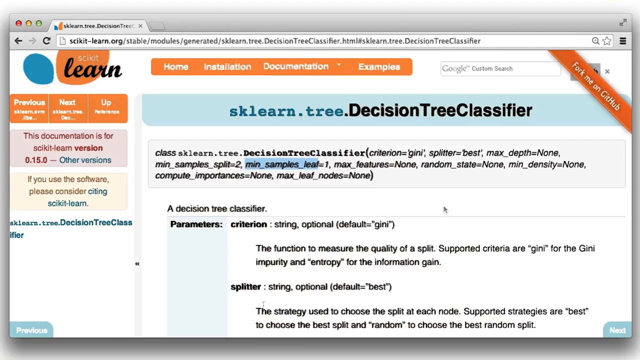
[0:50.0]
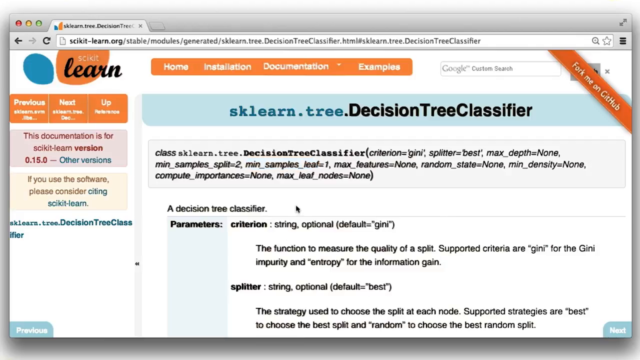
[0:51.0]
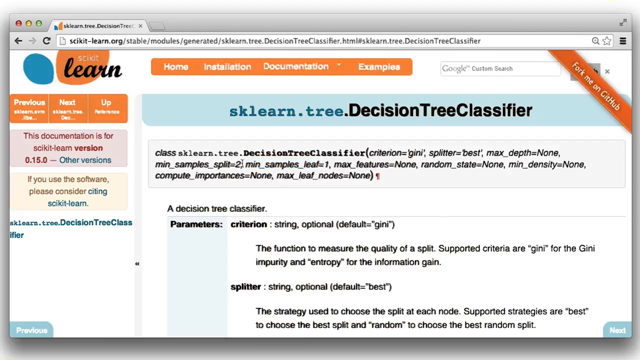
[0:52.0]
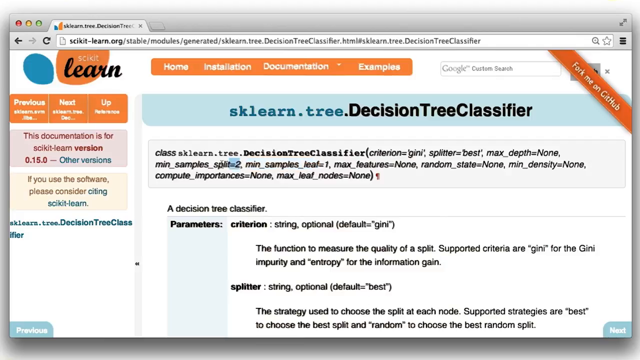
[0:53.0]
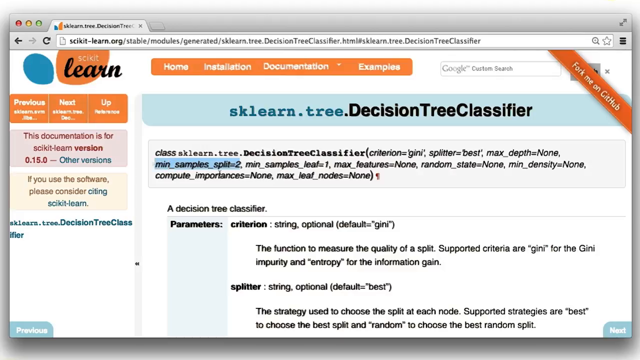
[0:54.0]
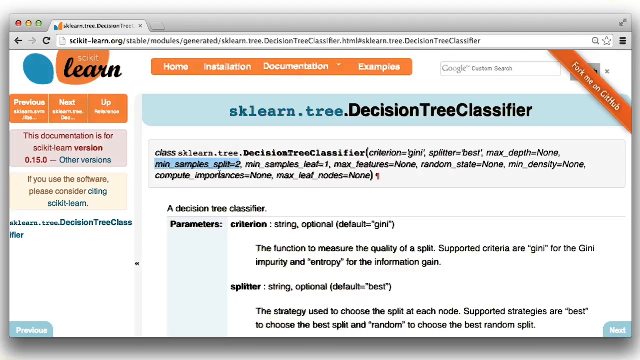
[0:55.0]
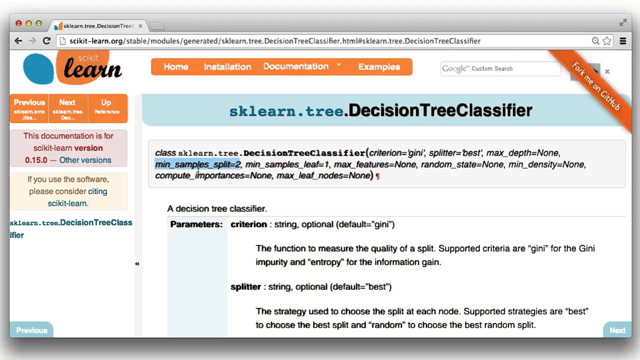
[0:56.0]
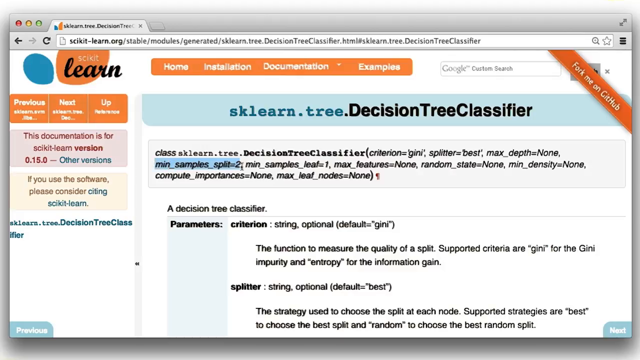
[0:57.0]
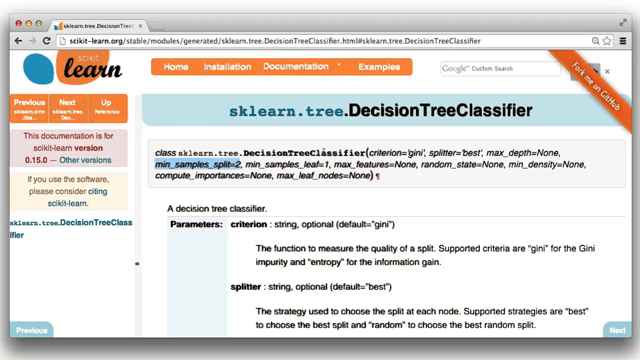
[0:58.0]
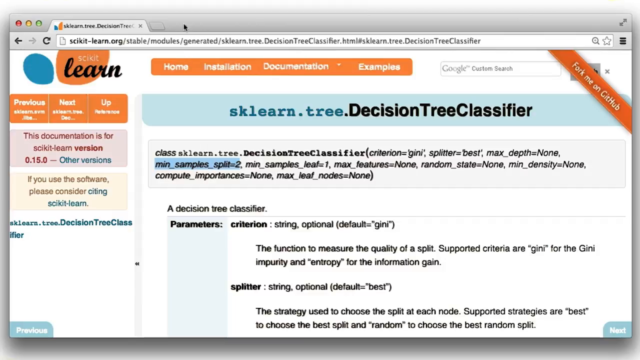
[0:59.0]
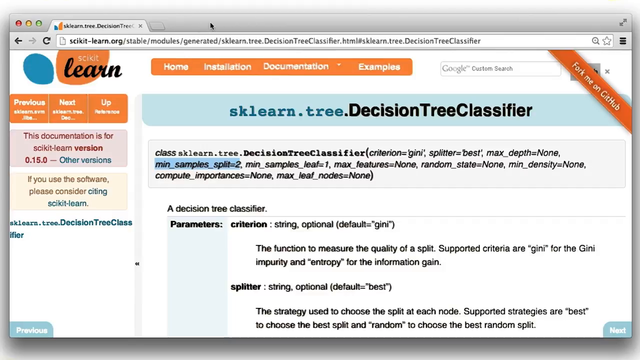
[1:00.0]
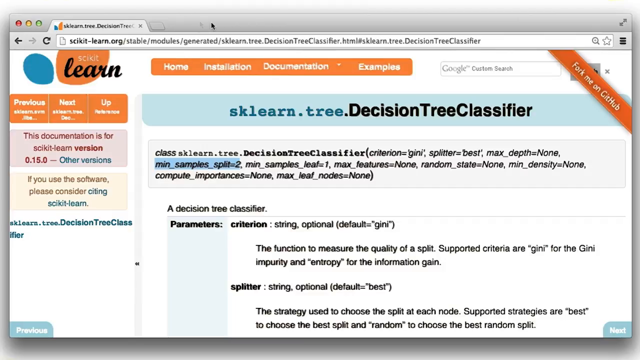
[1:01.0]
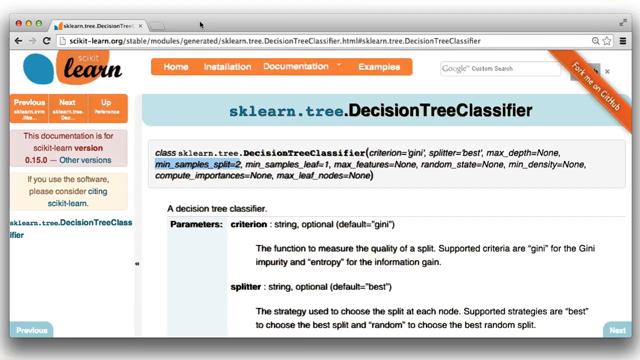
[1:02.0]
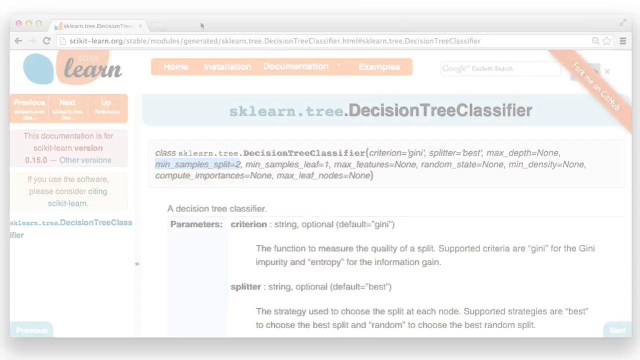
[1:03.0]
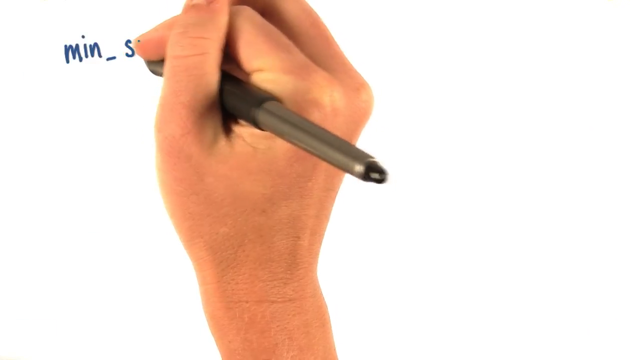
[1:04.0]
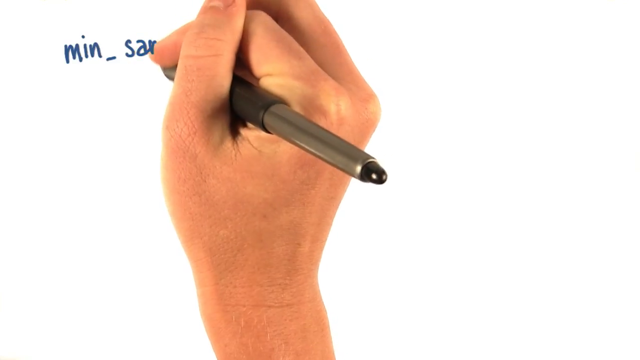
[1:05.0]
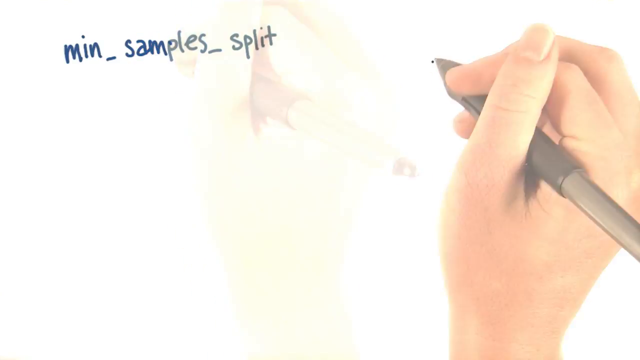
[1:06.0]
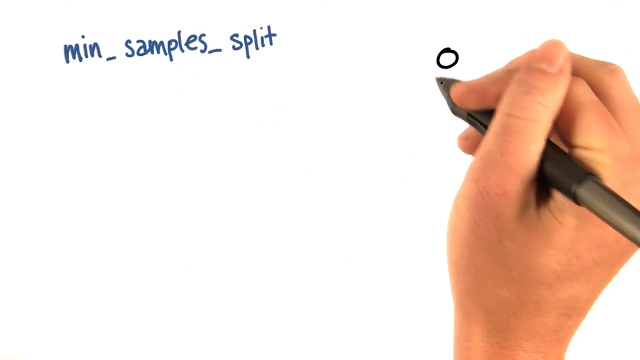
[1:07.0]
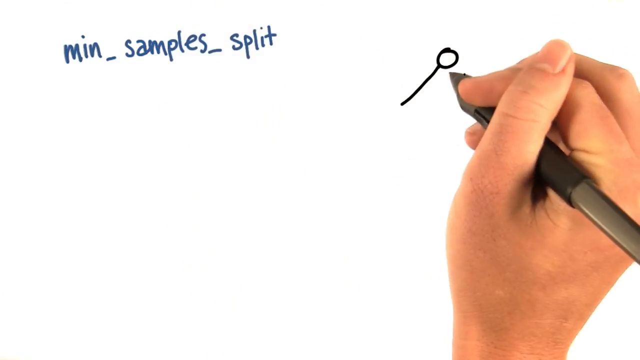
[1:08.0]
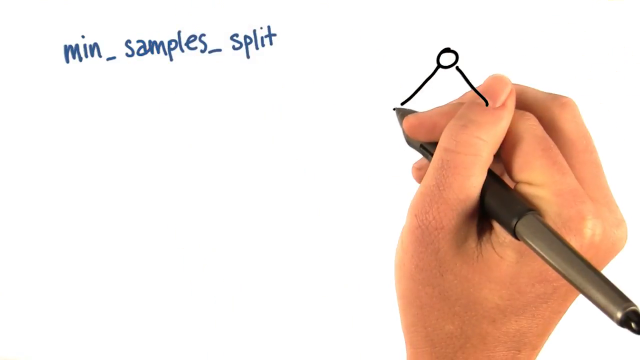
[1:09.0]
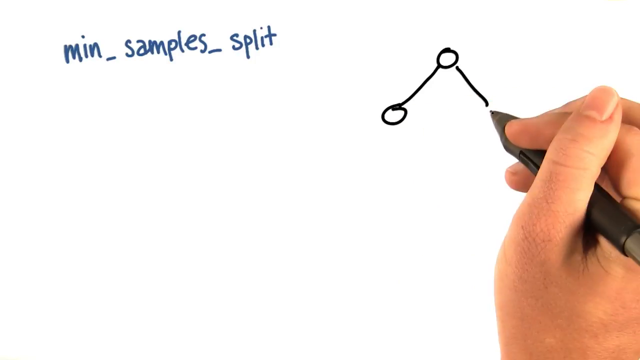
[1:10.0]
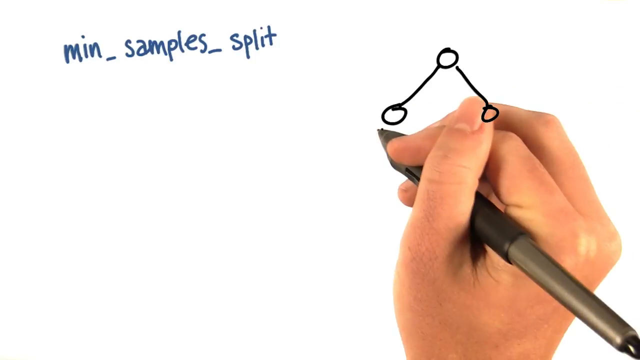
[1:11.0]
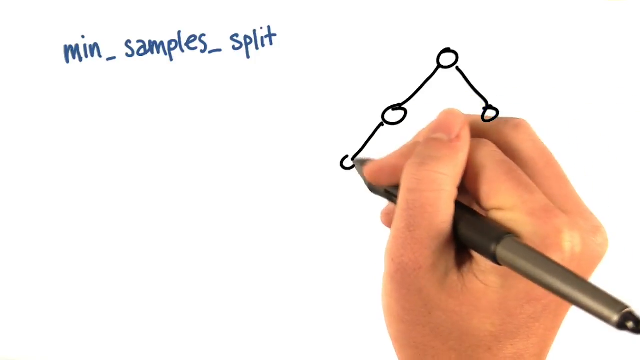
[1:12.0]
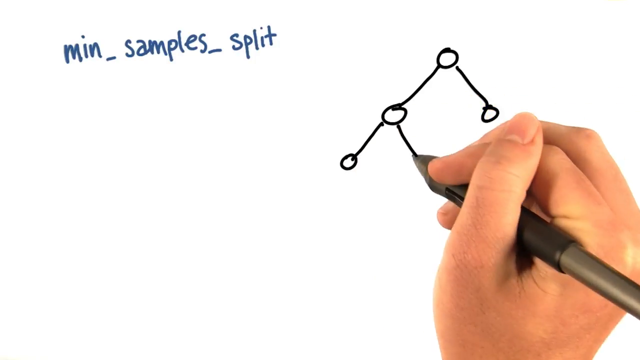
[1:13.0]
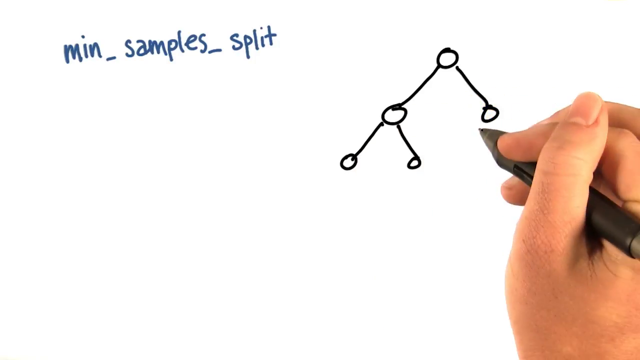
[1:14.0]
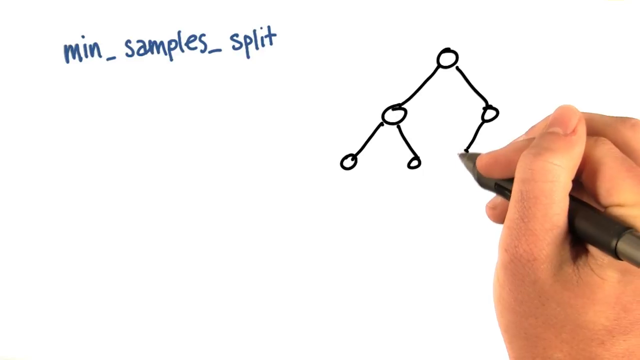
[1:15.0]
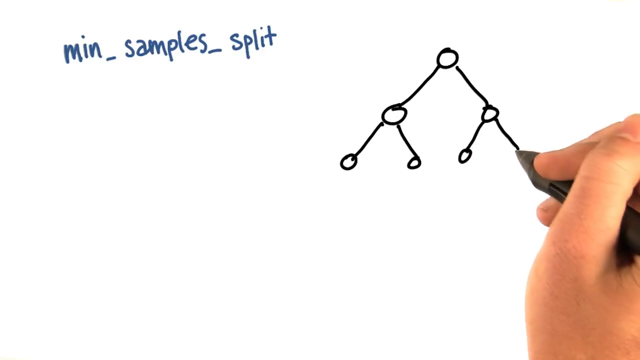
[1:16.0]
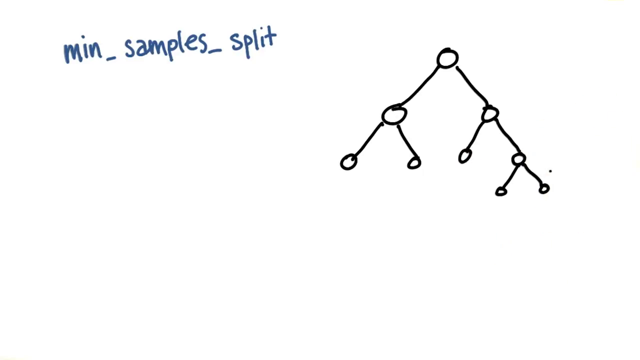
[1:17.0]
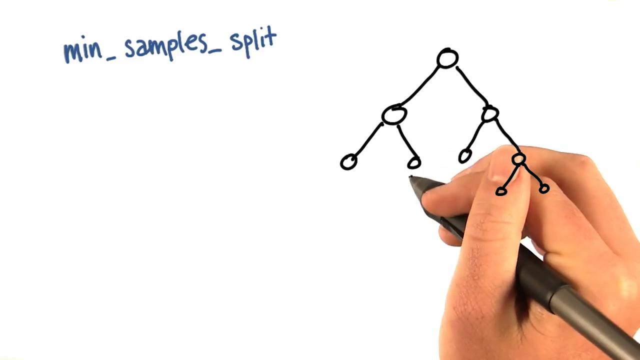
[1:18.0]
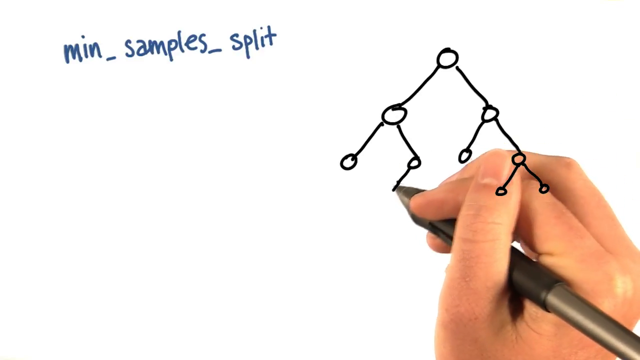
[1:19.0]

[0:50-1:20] After highlighting minimum samples leaf in the description, the person highlights minimum samples split again, then hovers over the top of the browser window. The next shot shows a whiteboard simulation that augments the writing of the pen being used. The person holds a pen in their right hand between the index finger and thumb and writes "min_samples_split" in a dark muted blue. On the right side of the screen, in black, they draw a circle with two lines going from it into more circles, apparently representing nodes and edges. Each of those two circles has its own two circles branching out with lines, and this keeps going, forming a graph of nodes and edges from the top down.